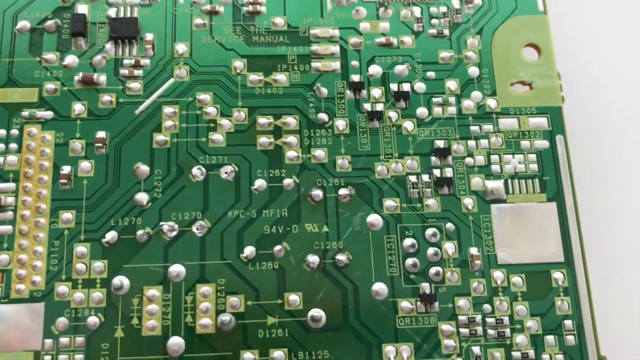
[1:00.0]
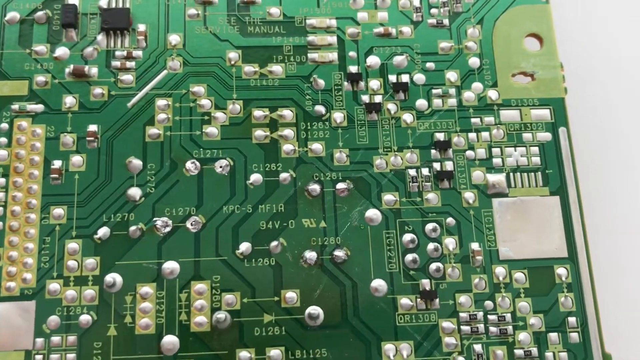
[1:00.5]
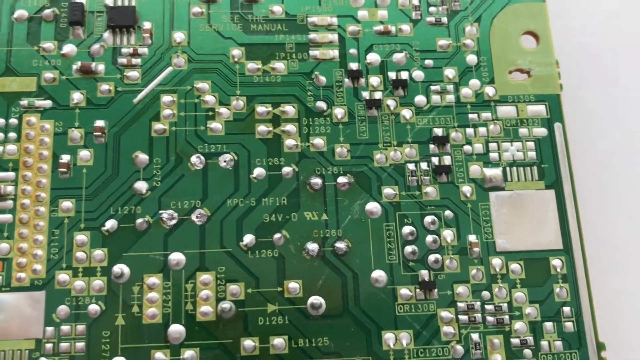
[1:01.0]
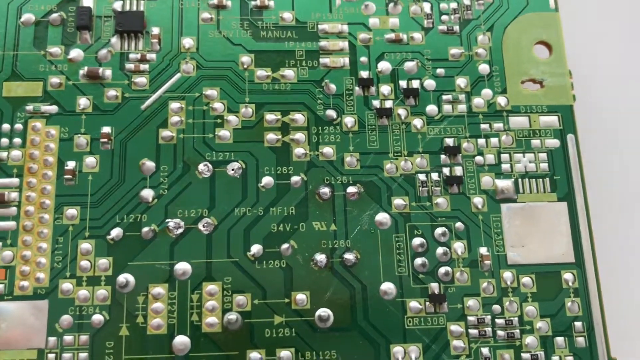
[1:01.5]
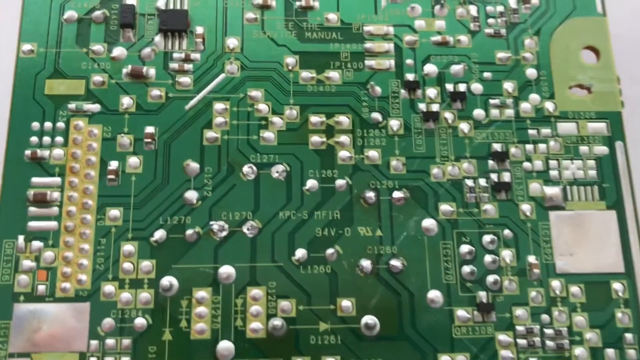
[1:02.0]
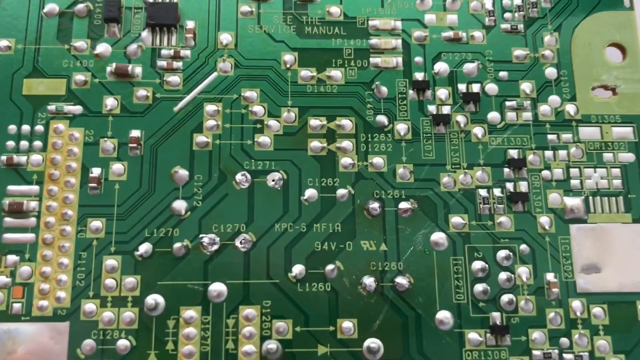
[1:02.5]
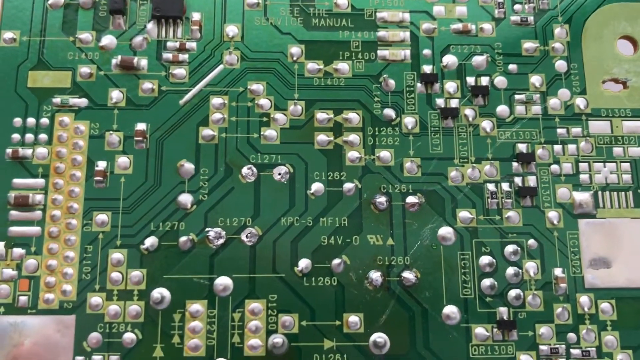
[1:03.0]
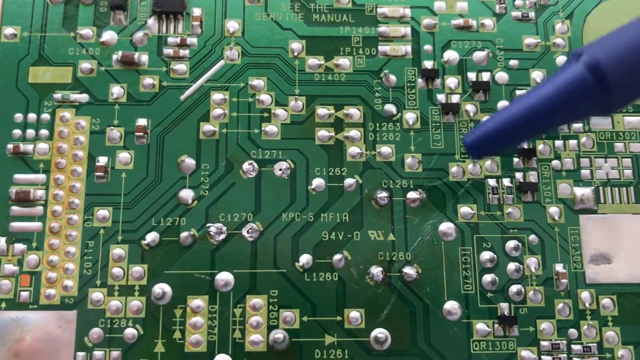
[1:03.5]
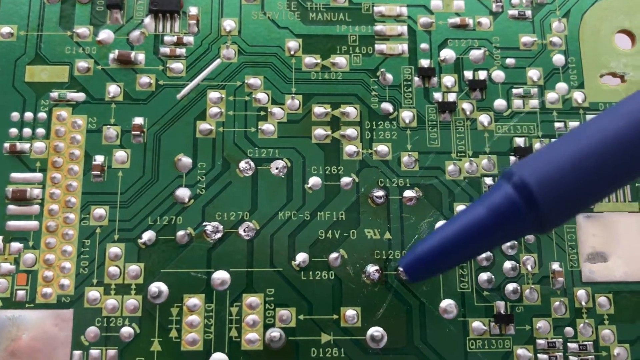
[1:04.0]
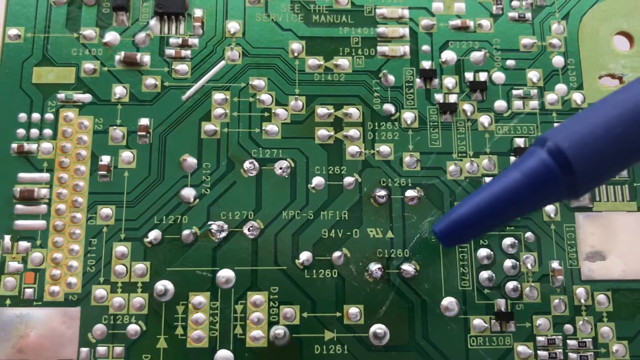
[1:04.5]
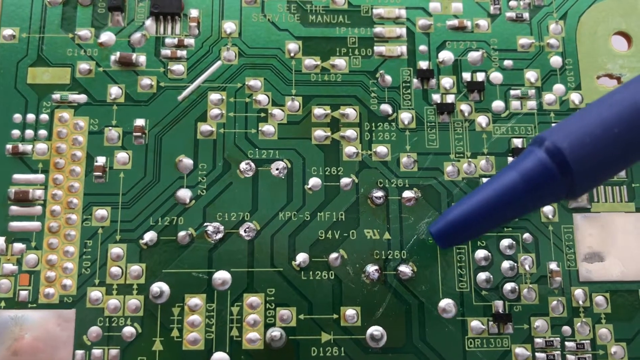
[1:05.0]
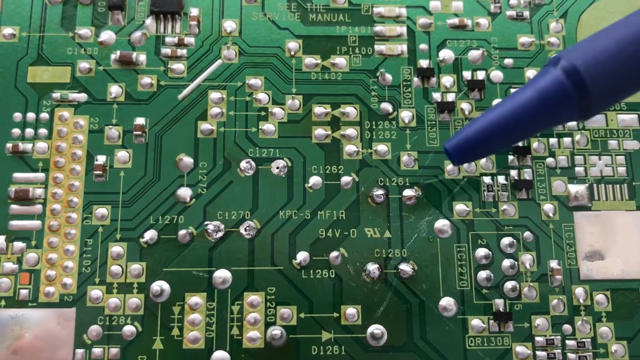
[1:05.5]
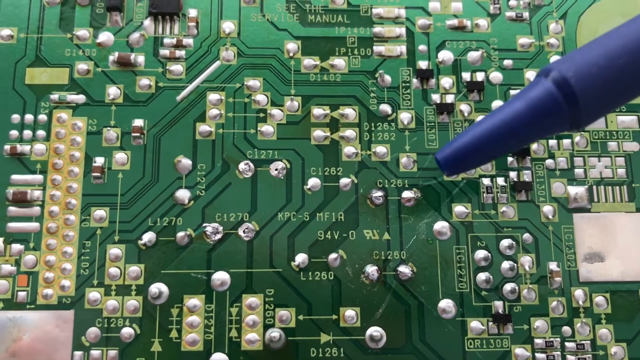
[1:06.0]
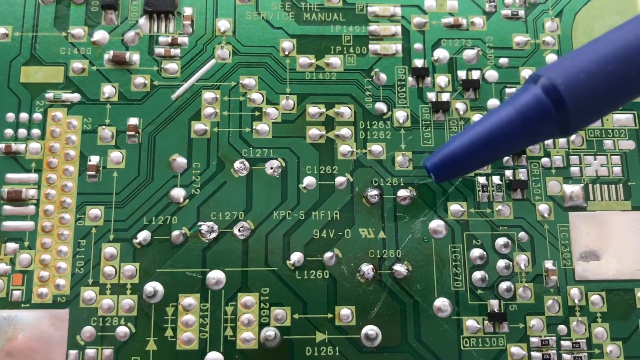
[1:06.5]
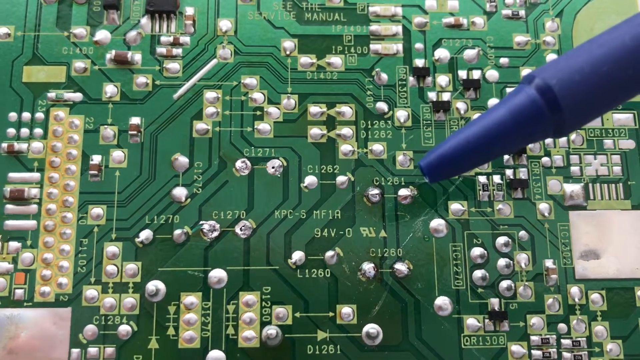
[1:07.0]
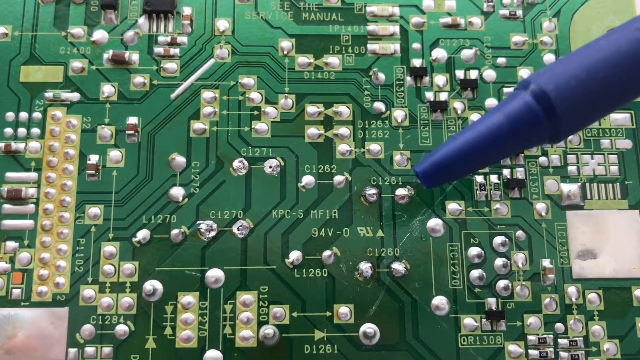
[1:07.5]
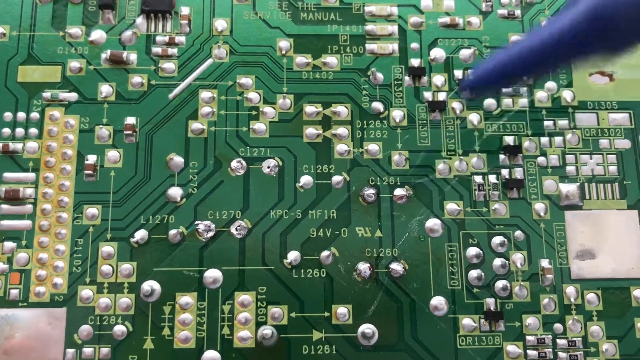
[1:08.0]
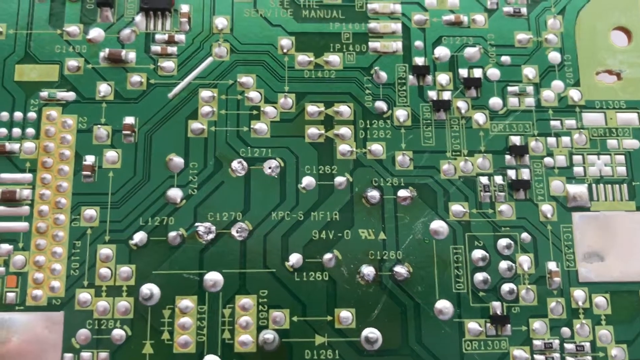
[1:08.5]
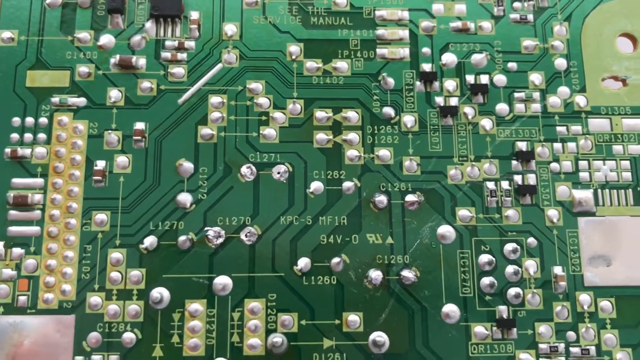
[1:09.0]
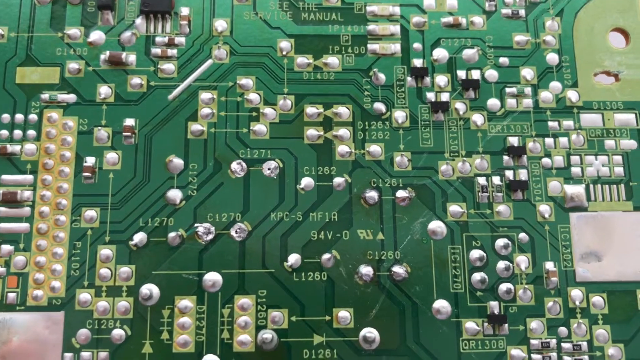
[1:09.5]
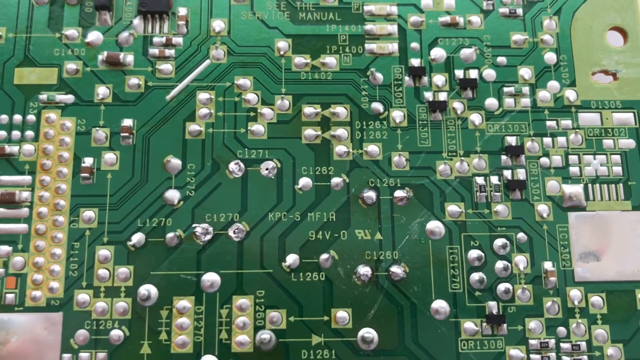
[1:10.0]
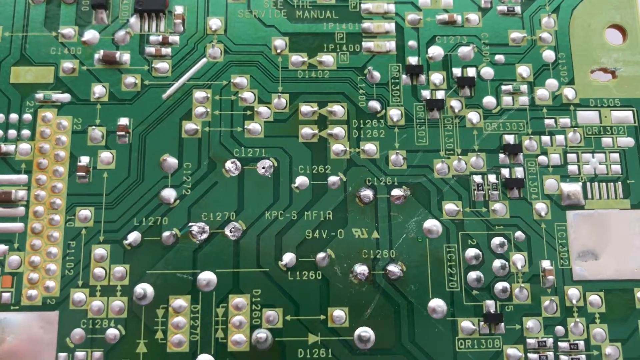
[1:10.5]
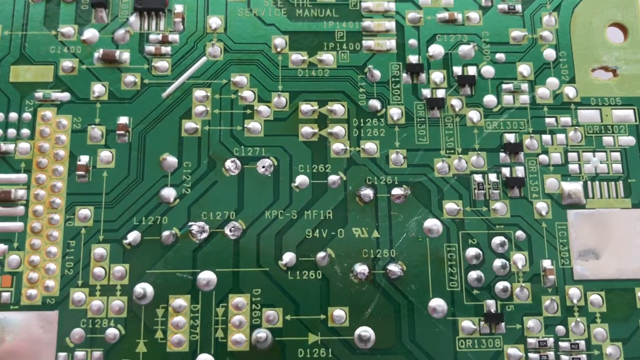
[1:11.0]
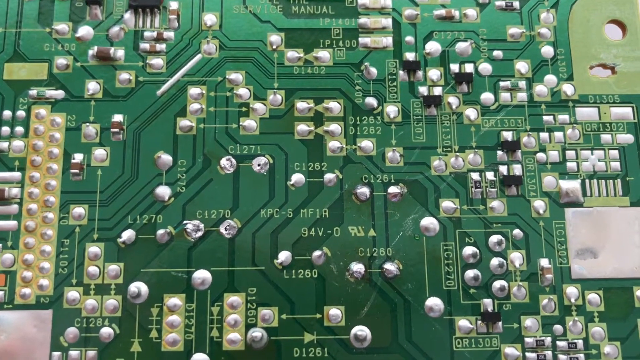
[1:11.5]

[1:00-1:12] The green and metallic circuit, of the kind found in devices such as smartphones, tablets and TV remotes, is shown. The person recording points with the blue crayon or blue pen at the area where the capacitors were replaced; the tip itself is not visible, but its outline indicates a crayon or a pen. It is used to show the two different areas on the green circuit where the capacitors were changed.